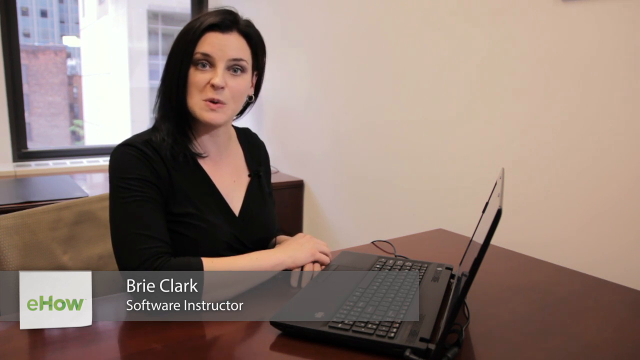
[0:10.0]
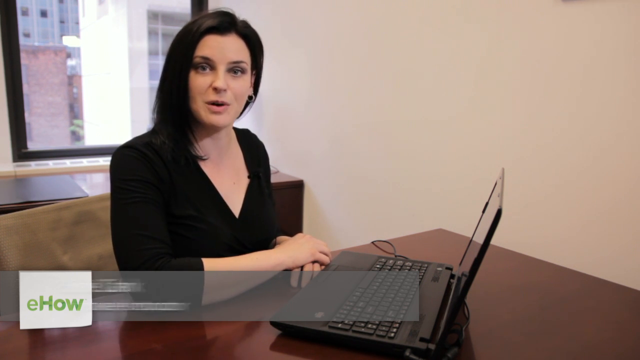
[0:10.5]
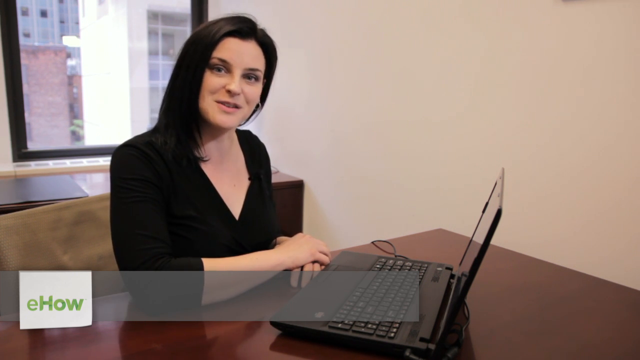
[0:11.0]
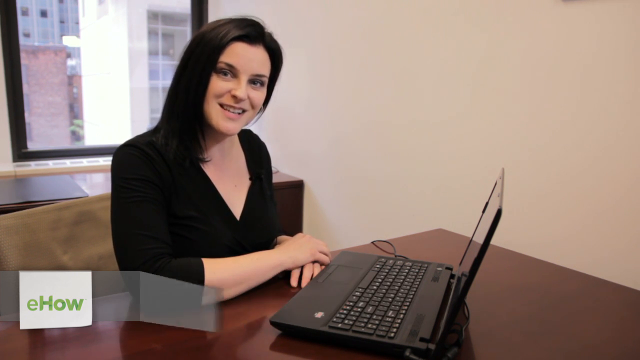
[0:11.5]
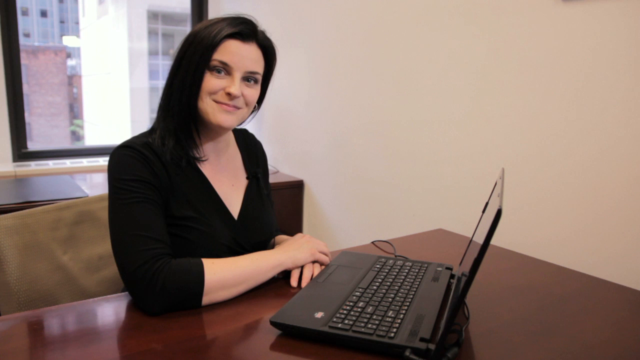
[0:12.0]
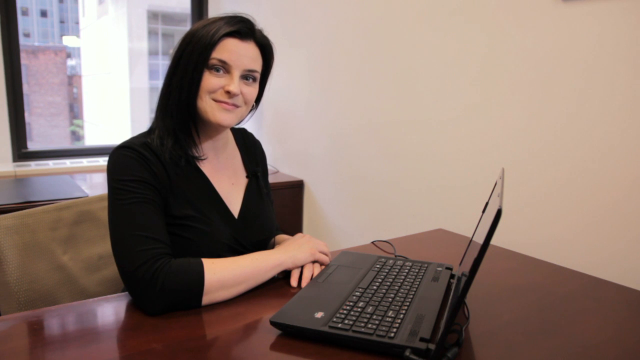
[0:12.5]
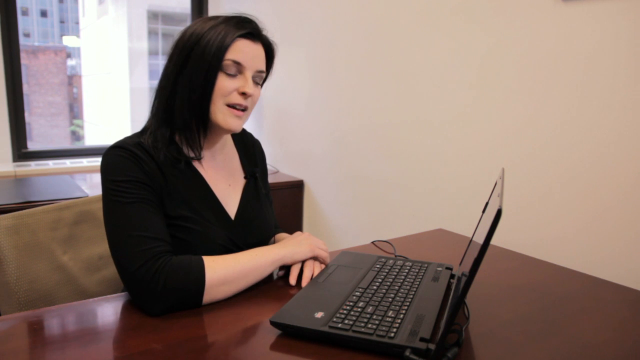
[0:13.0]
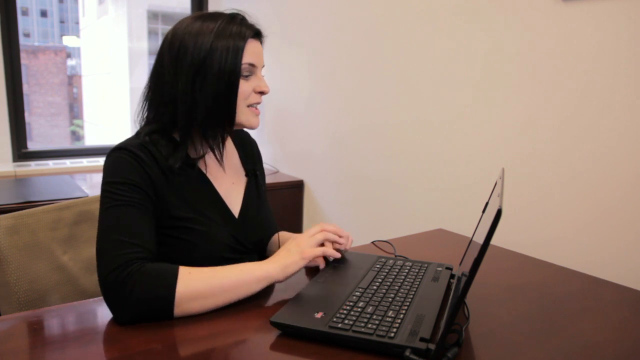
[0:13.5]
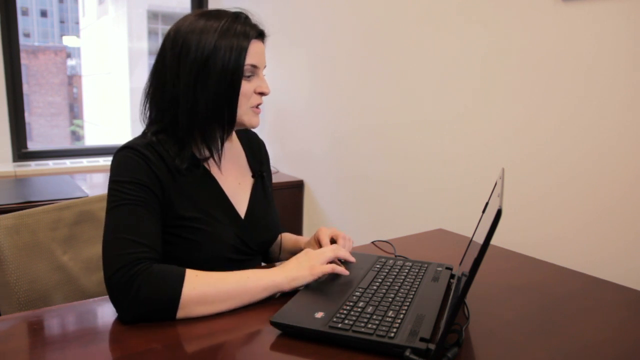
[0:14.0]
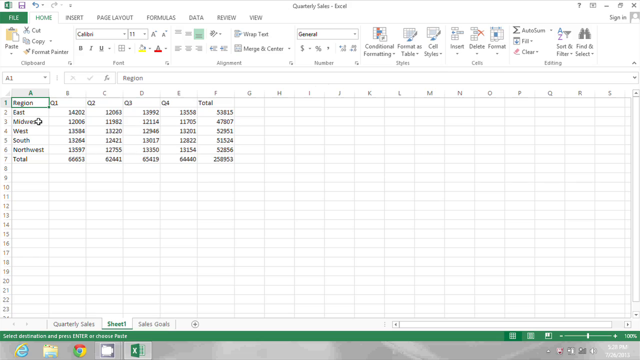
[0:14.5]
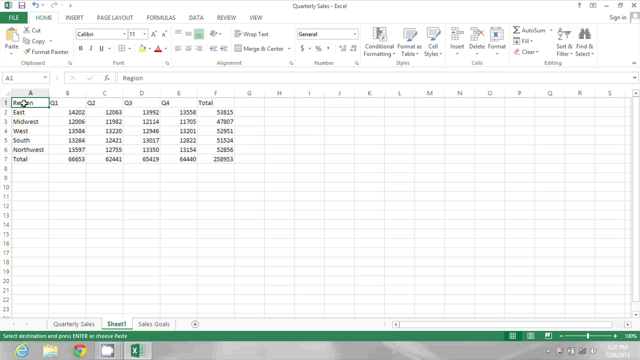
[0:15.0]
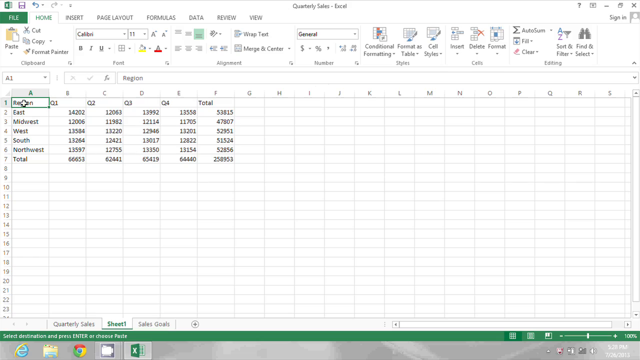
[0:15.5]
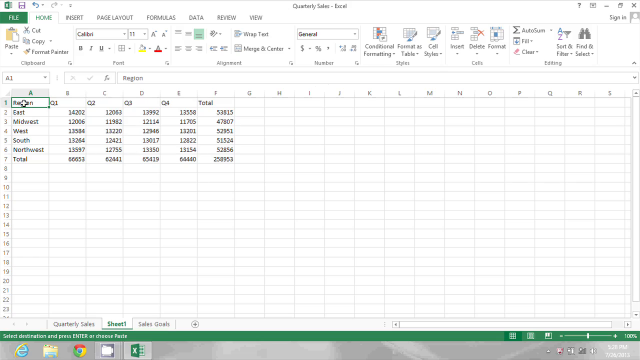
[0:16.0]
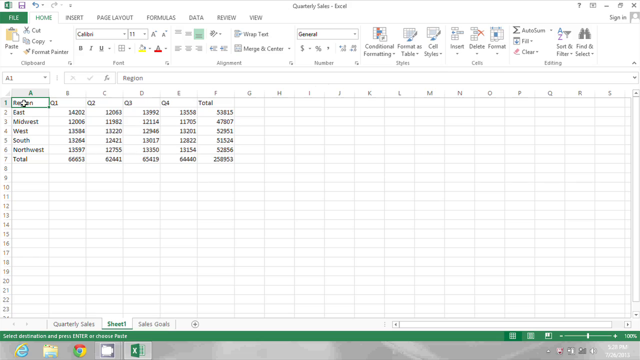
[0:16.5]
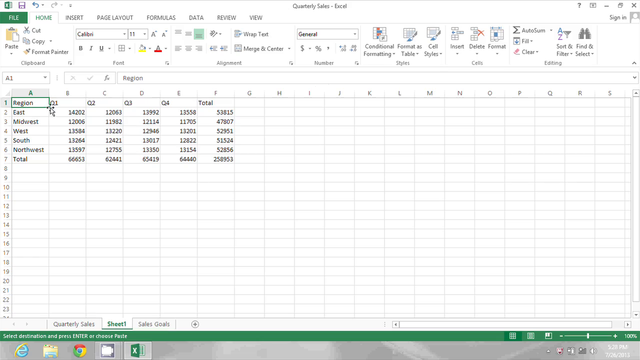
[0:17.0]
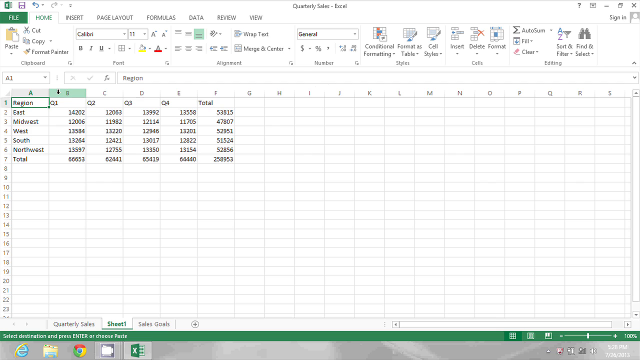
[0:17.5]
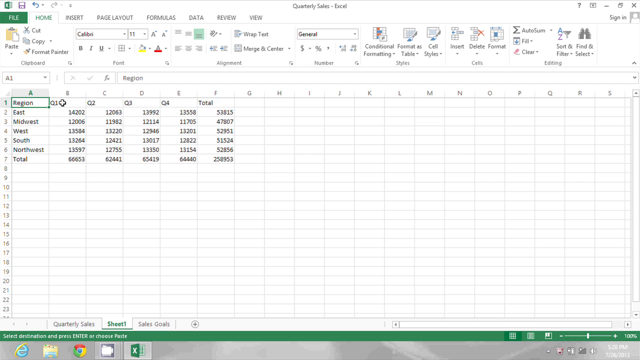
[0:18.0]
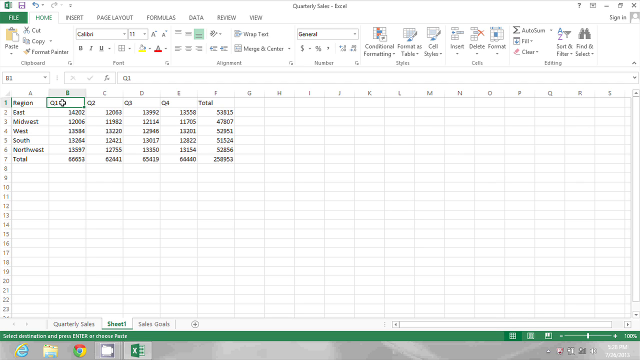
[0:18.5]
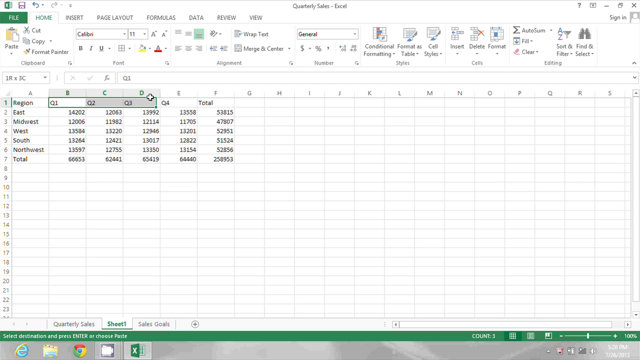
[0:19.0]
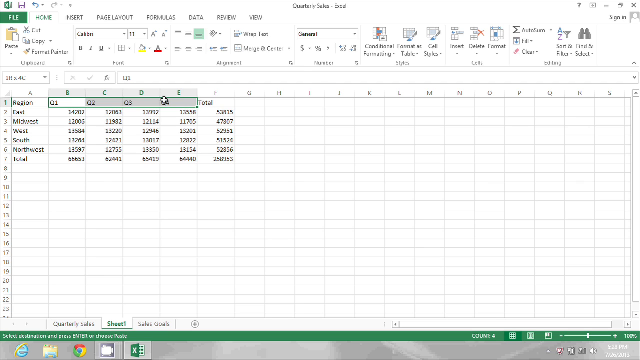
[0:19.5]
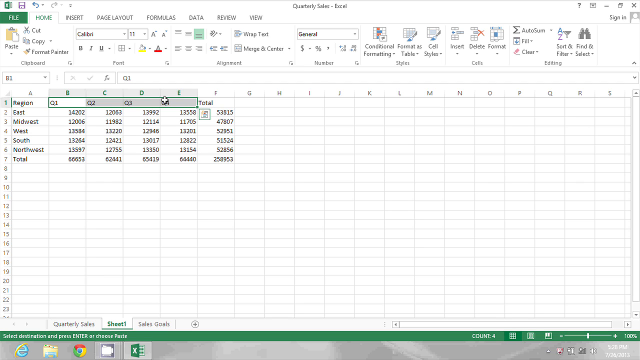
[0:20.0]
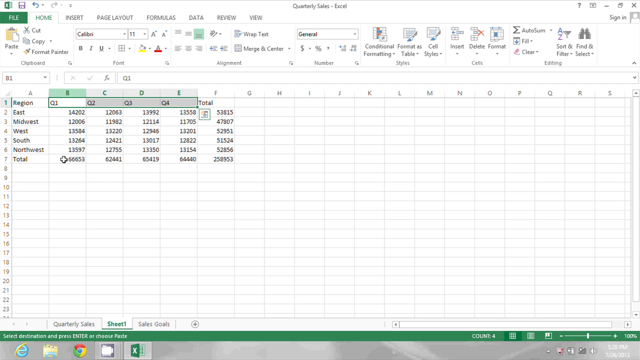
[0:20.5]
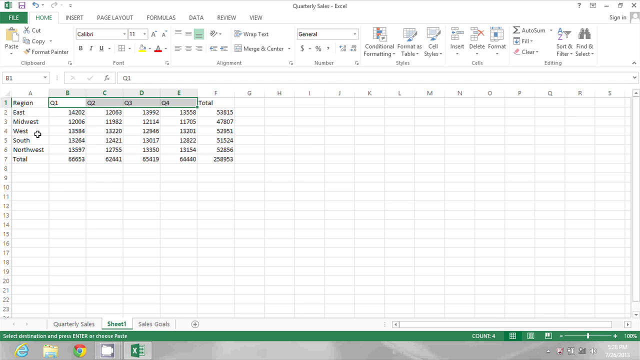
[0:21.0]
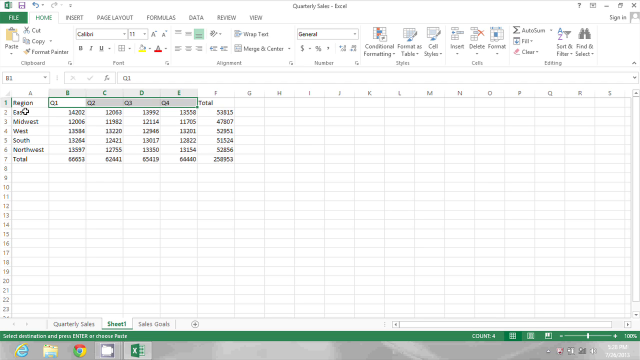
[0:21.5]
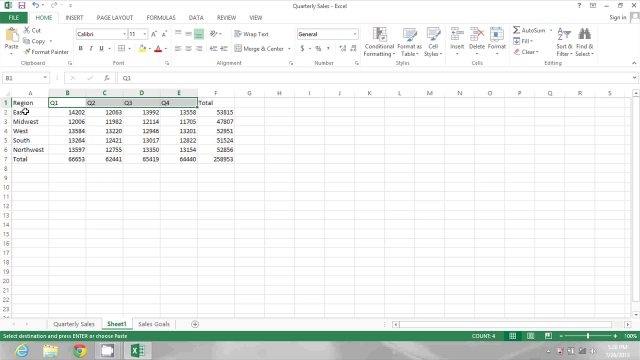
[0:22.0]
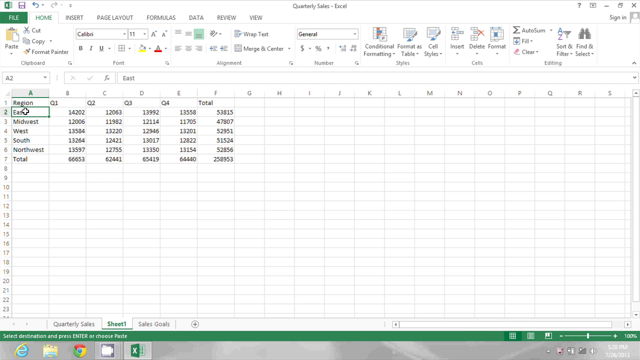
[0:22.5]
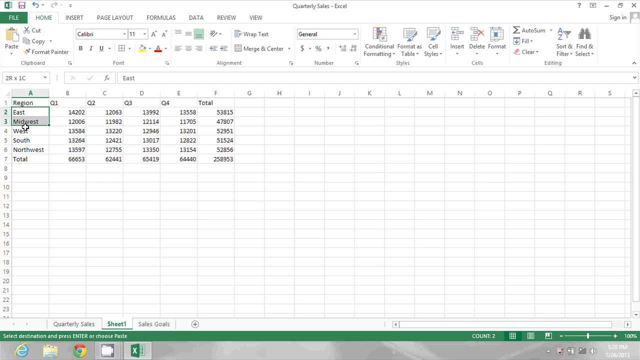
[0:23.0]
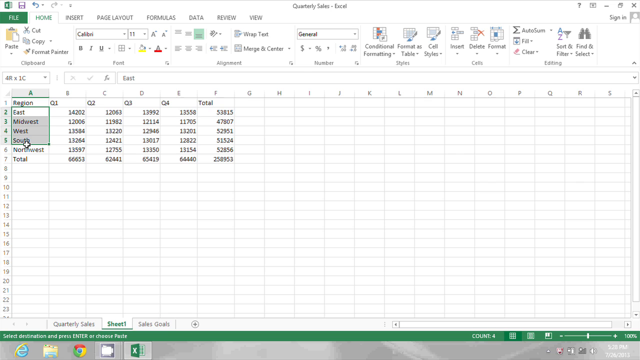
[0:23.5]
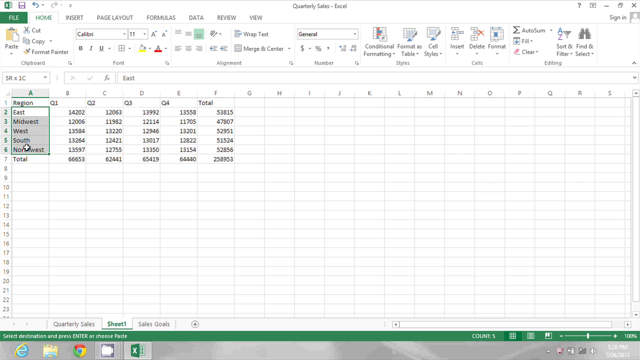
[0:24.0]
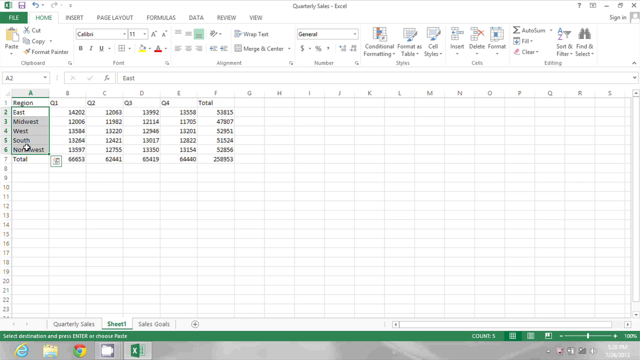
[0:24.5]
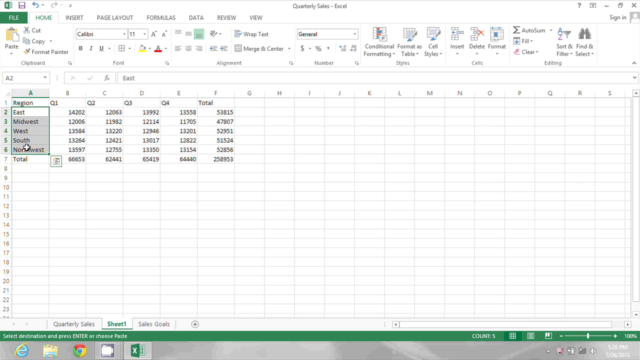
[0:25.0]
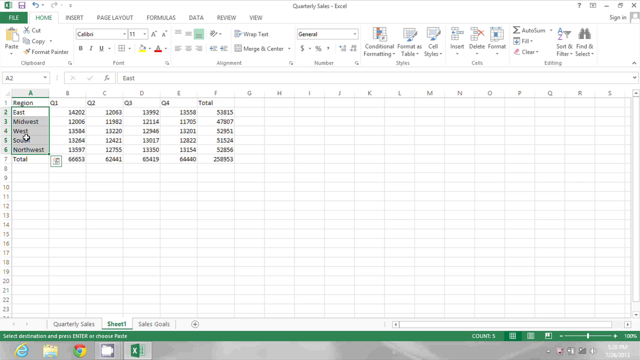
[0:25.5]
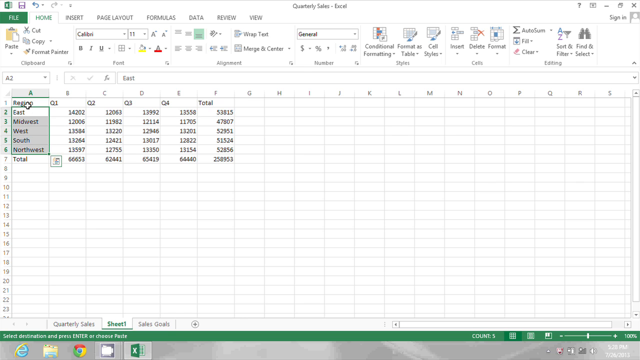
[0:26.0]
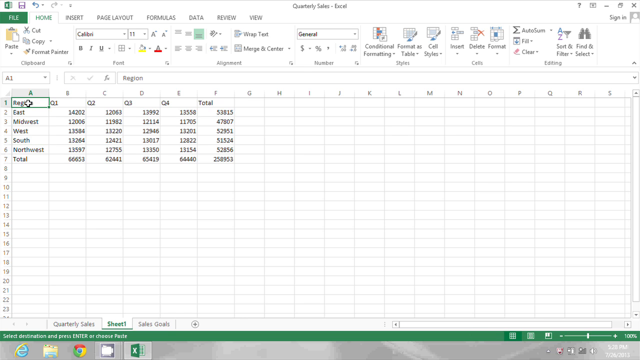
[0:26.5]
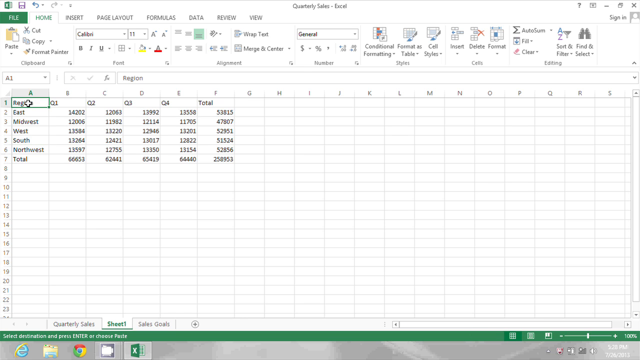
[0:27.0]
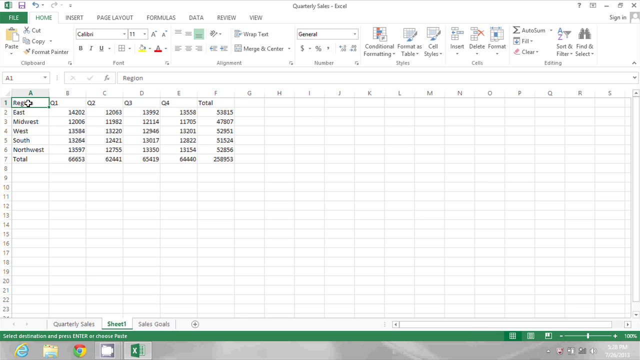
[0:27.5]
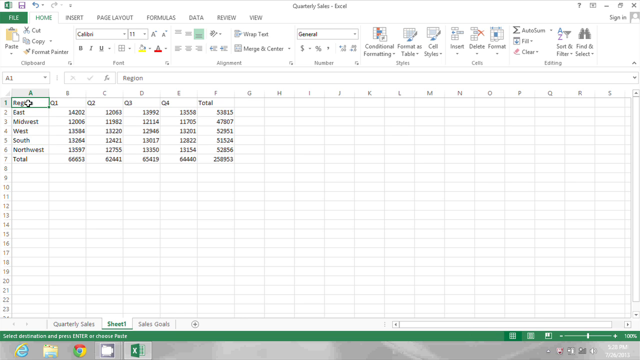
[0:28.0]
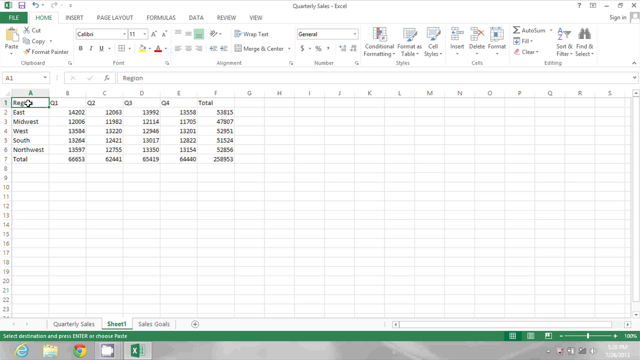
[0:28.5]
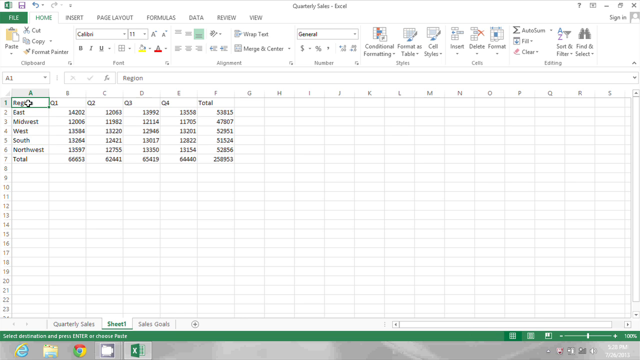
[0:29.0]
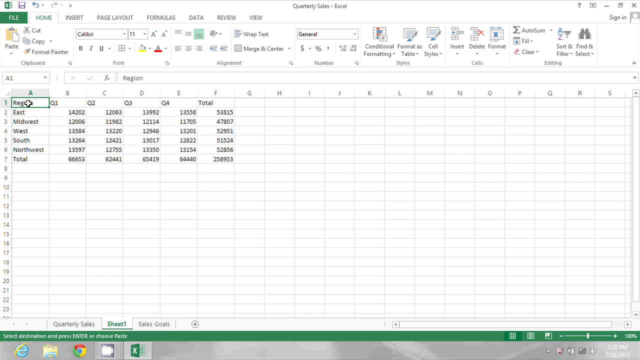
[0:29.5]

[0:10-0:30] A woman sits by herself in what appears to be a business office. Behind her is a window through which various buildings can be made out, and it is daylight. She faces the camera; she has black hair and a black shirt, and her hands rest on top of each other on a maple table, with a laptop in front of her. At the bottom, text reads "eHow" and lists her name as "Brie Clark" and her position as "software instructor". She smiles and kind of briefly nods, then looks at the laptop and puts her hands on the keyboard. A spreadsheet comes up on the screen: an Excel quarterly sales sheet, as stated at the top, showing different regions. The mouse goes to the region section, which is highlighted, listing East, Midwest, West, South and Northwest. It moves over to quarter one before highlighting all four quarters, then highlights all of the regions as well, before going back and clicking on just the region button itself.